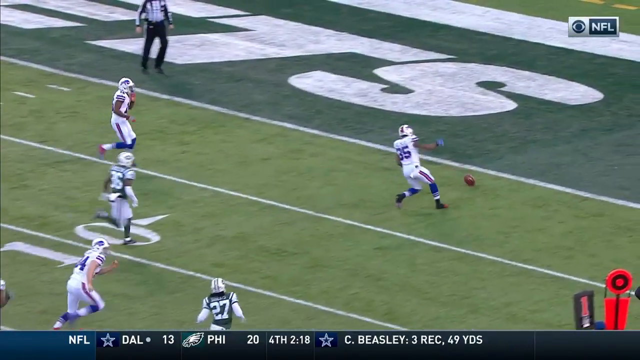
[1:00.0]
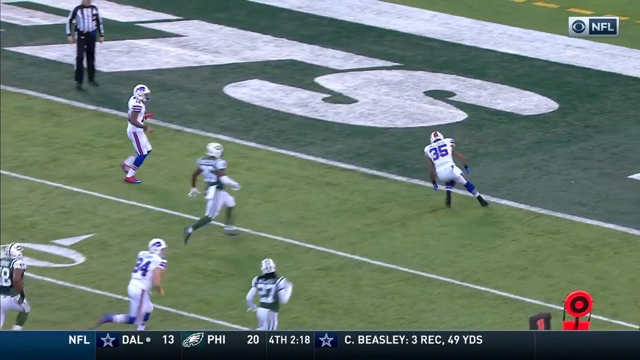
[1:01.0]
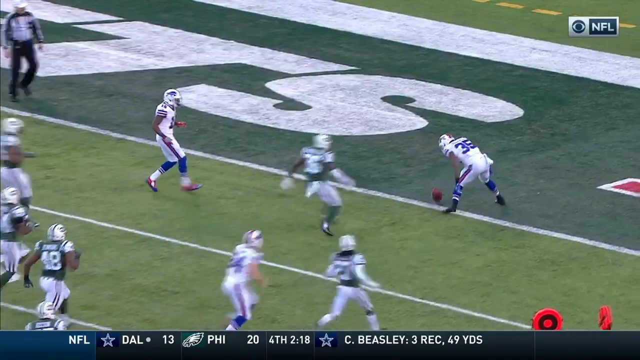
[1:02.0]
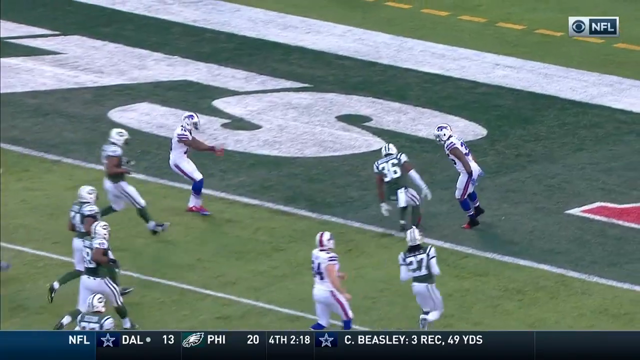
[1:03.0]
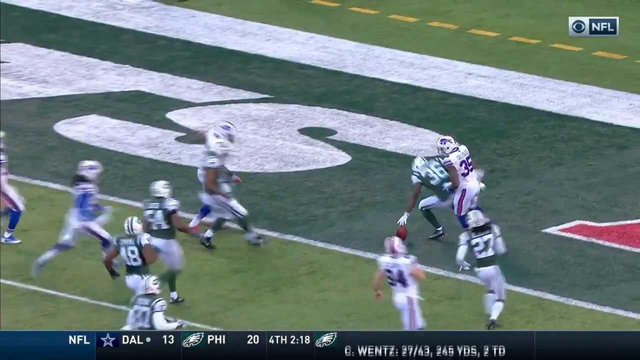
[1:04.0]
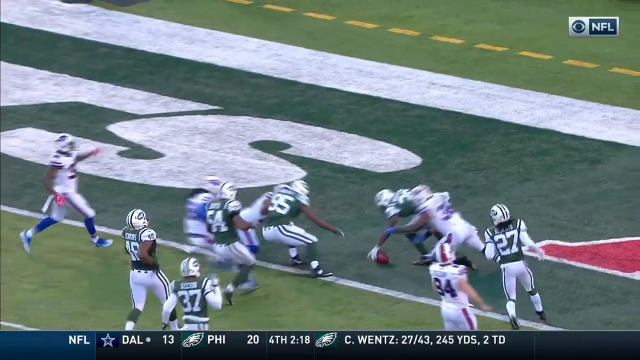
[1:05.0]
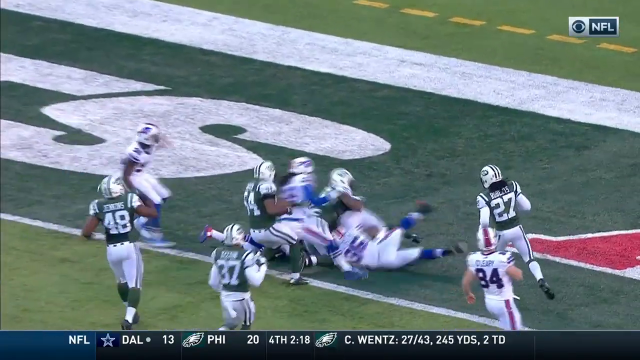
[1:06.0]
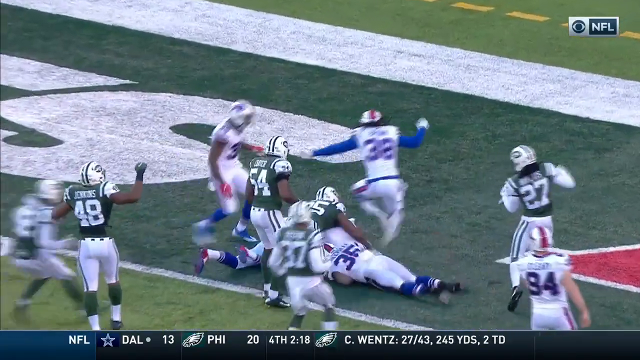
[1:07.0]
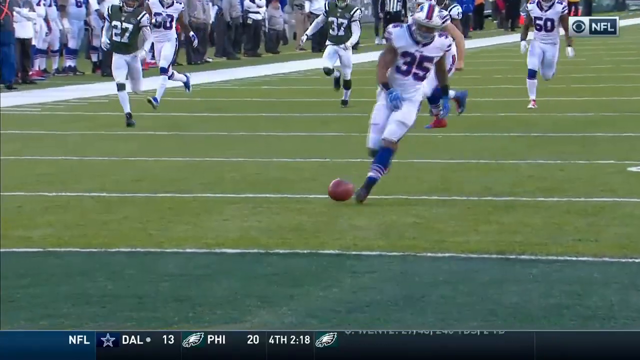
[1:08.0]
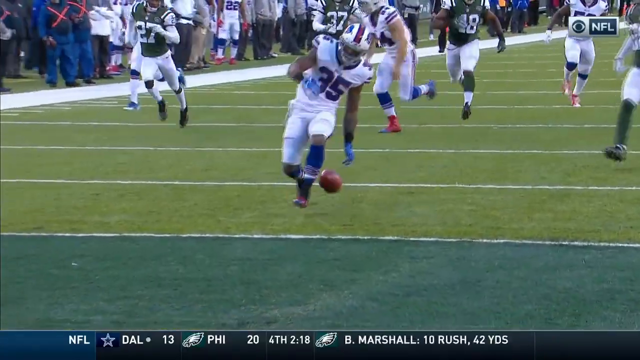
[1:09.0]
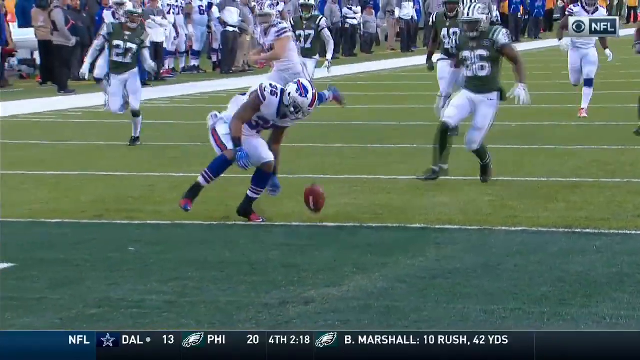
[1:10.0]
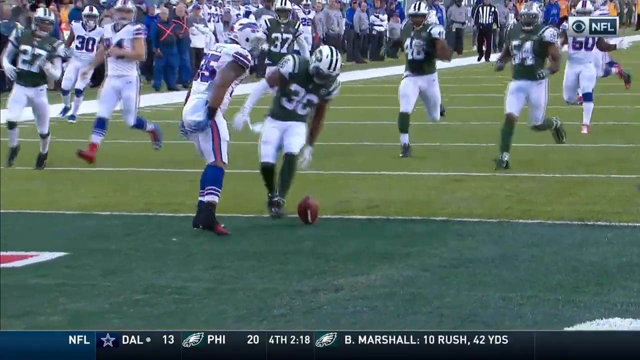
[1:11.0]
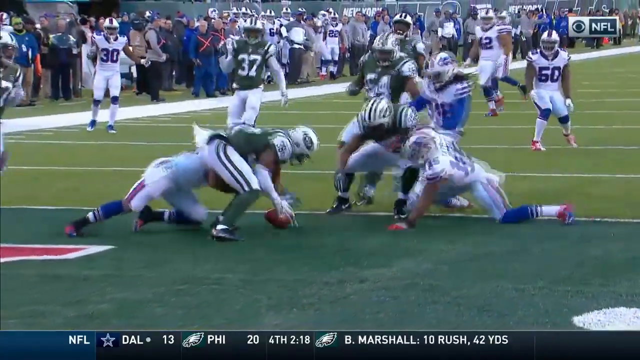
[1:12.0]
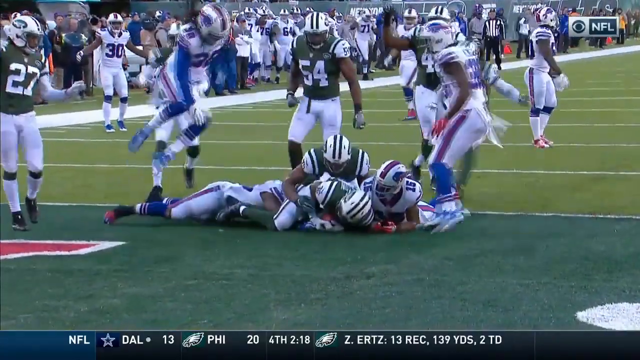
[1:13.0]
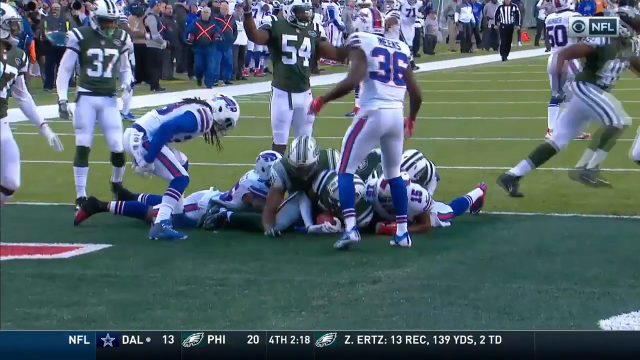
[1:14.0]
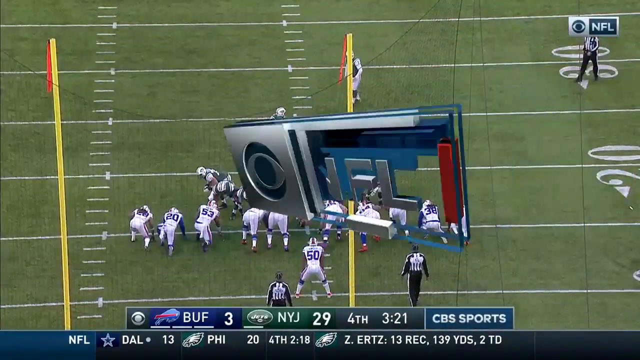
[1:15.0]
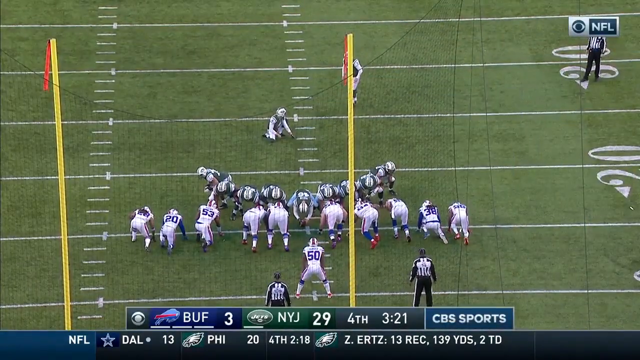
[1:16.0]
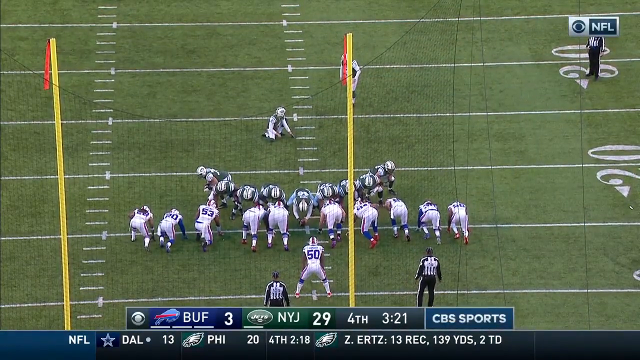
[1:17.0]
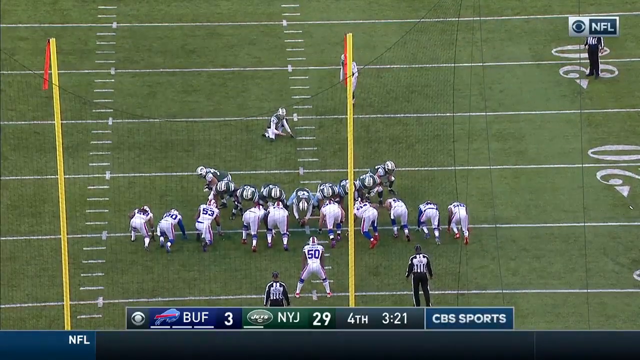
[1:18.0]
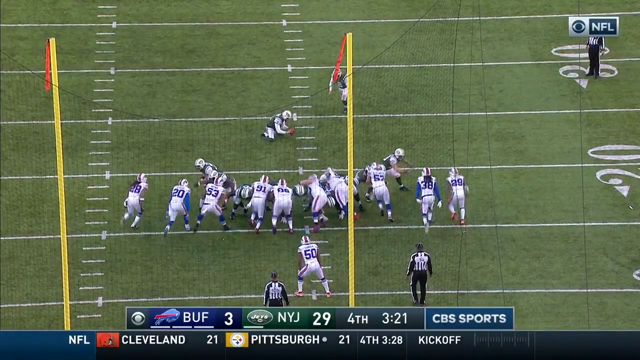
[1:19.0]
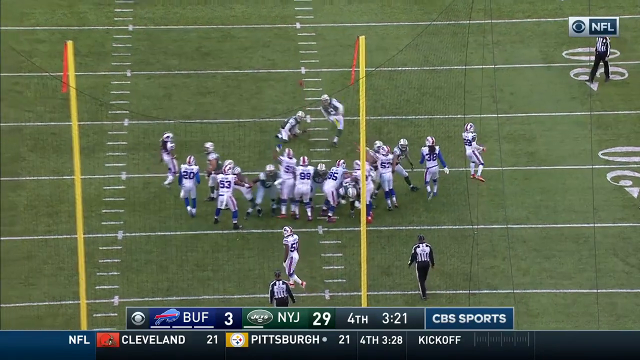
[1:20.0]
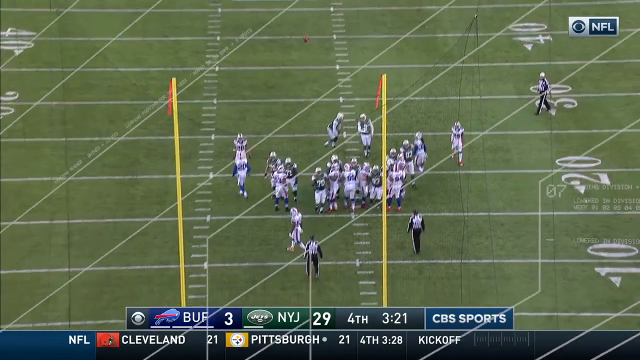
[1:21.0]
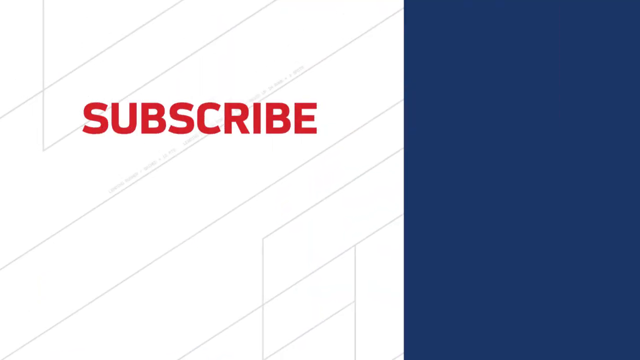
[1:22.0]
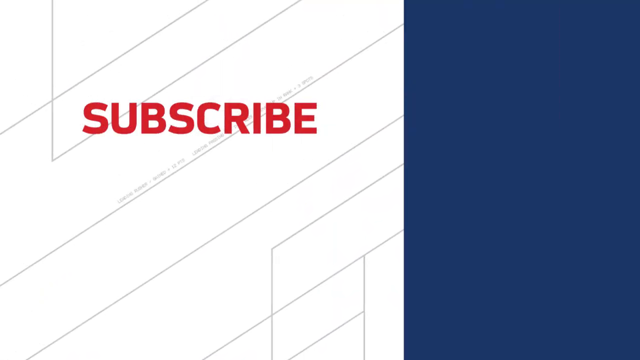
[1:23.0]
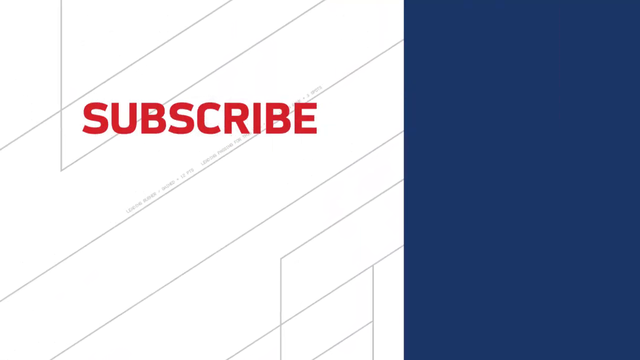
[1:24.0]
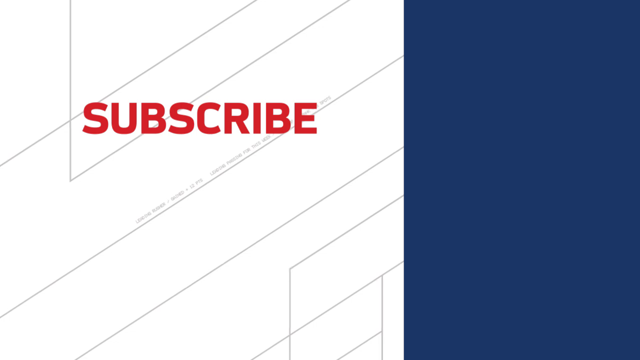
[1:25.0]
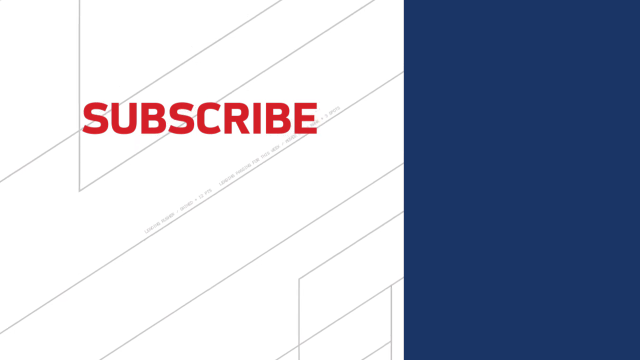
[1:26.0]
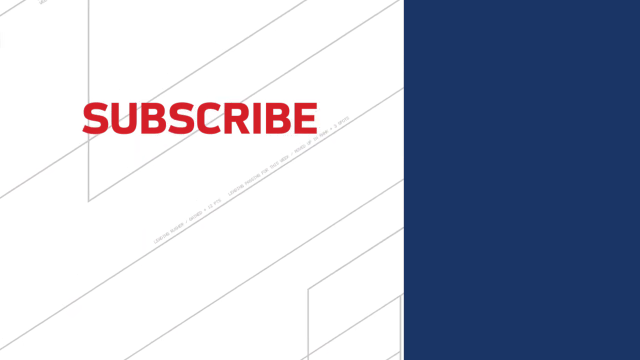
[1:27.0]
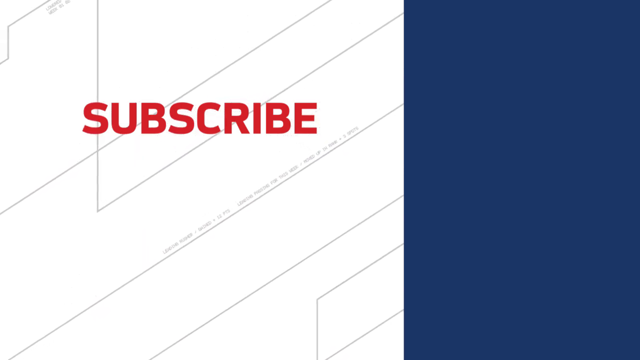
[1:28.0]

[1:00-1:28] A replay shows the kickoff play in which Buffalo Bills player number 35 accidentally taps the ball as it goes into the end zone, and a New York Jets player drops on top of it. The Jets' score is now 29, while Buffalo still has only 3. The video cuts to both teams in an extra point formation, with the goal posts toward the left of the screen. Three referees watch, two in the lower portion of the frame and one in the upper right corner near a sign that says "NFL". The video cuts away as the kick is going, before the result can be seen. Then "subscribe" appears on the left side of the picture, with gray lines on a white backing, and the whole right-hand portion is navy blue.